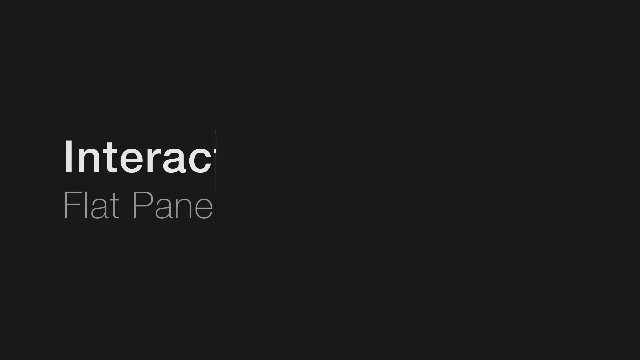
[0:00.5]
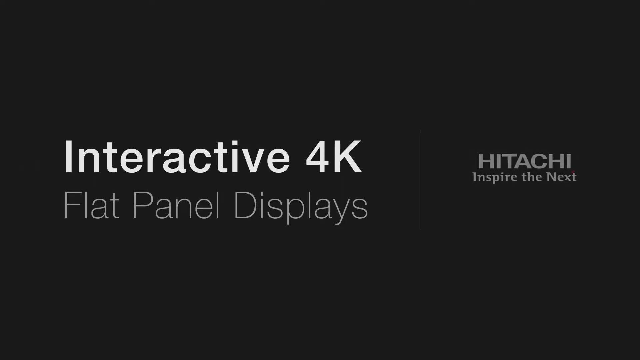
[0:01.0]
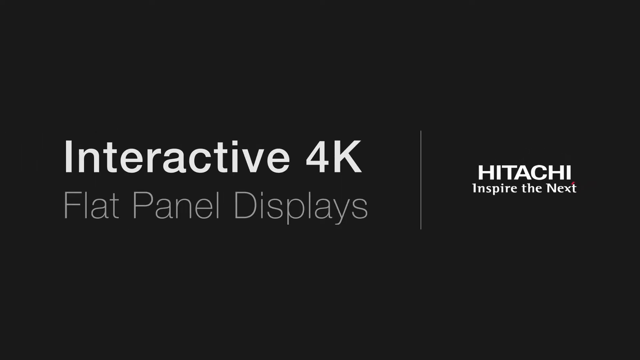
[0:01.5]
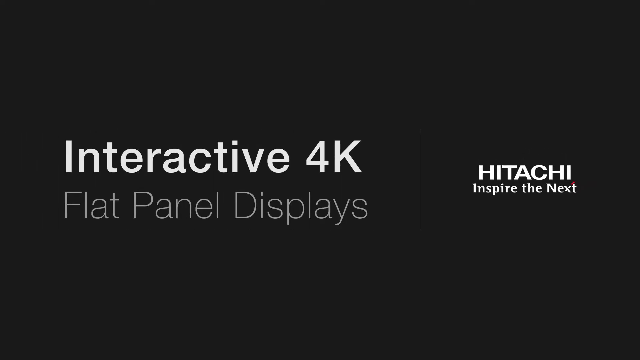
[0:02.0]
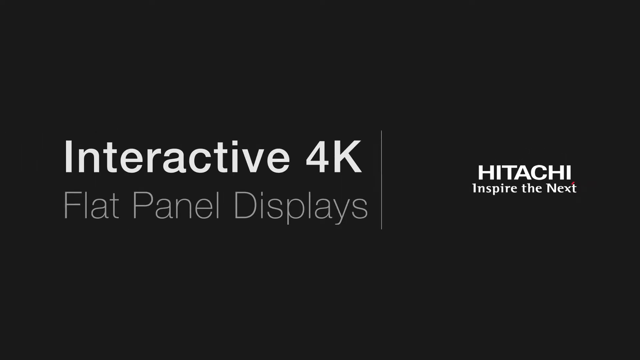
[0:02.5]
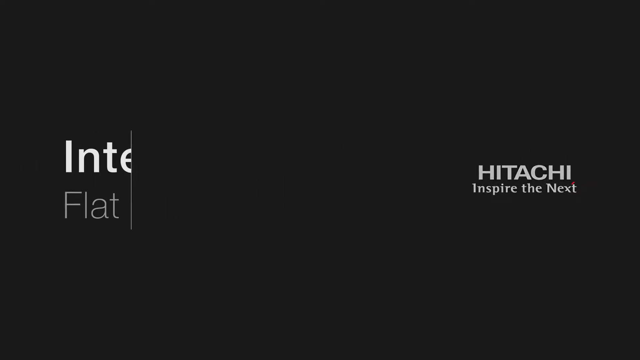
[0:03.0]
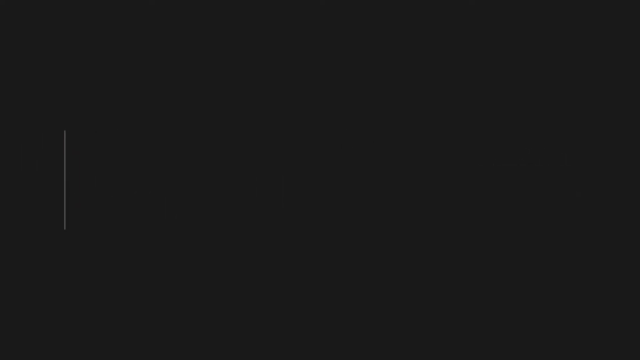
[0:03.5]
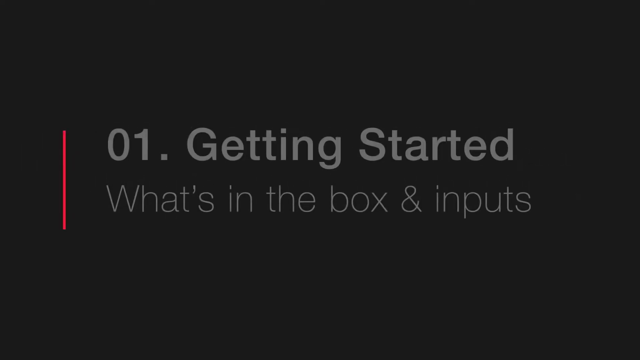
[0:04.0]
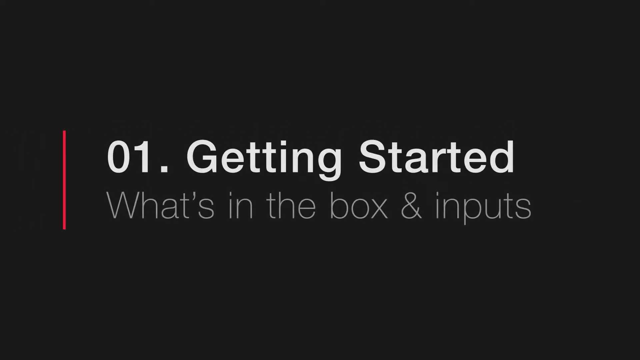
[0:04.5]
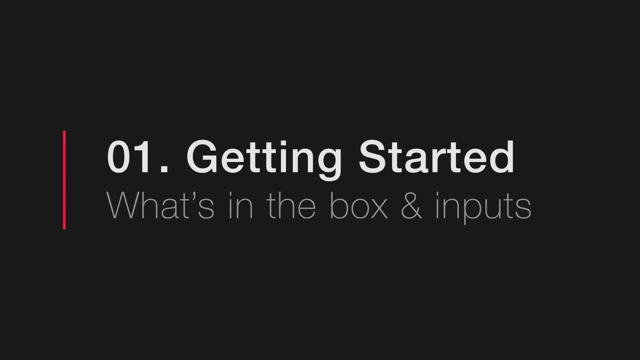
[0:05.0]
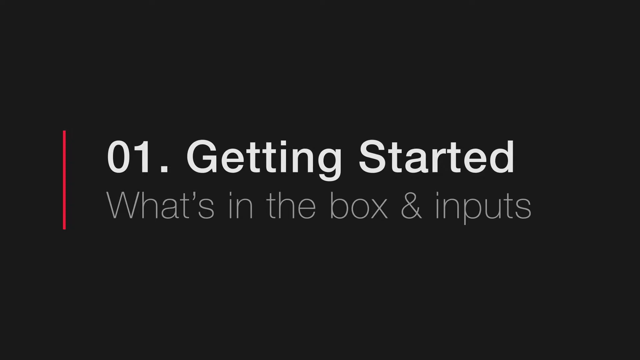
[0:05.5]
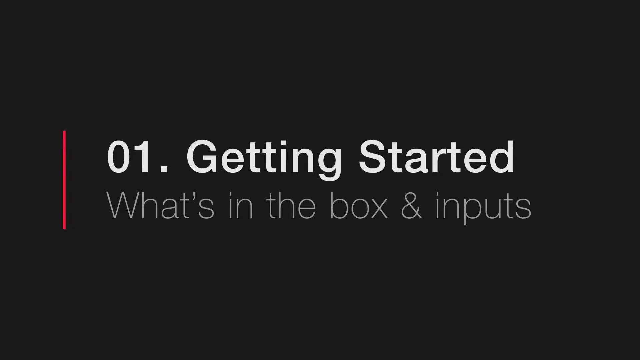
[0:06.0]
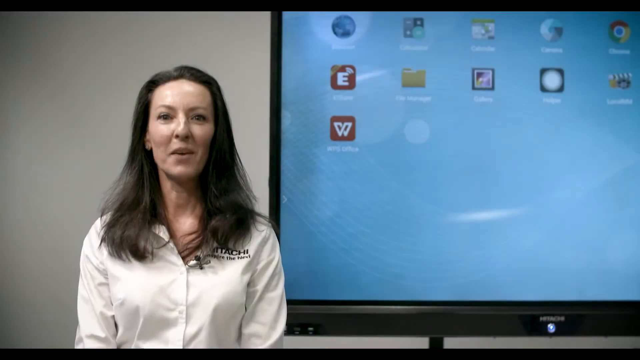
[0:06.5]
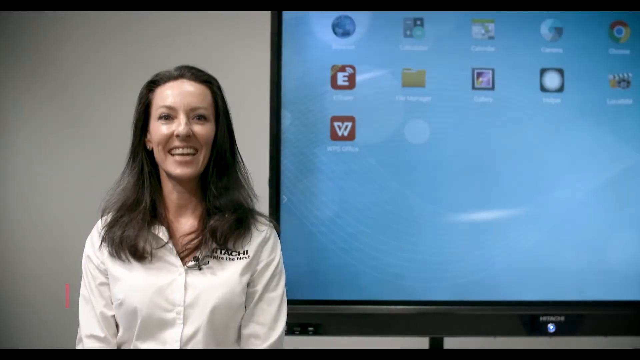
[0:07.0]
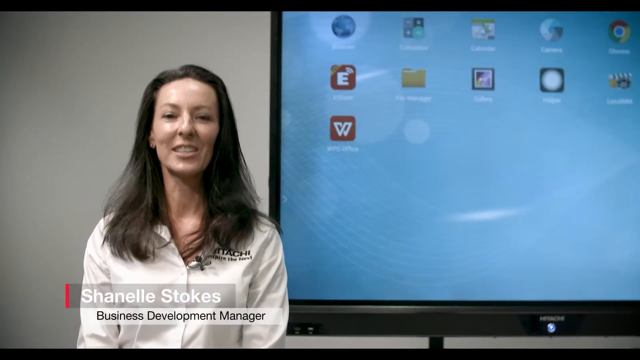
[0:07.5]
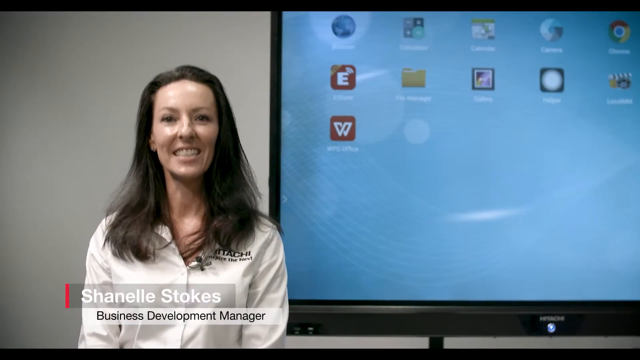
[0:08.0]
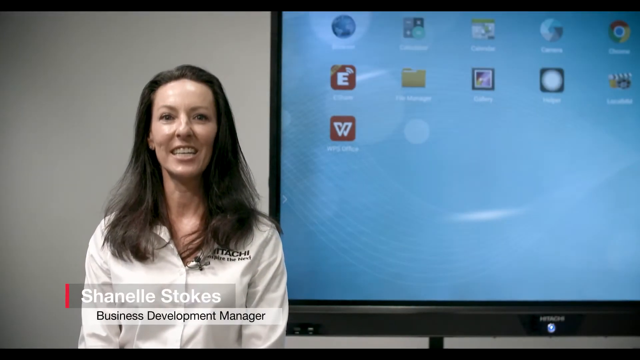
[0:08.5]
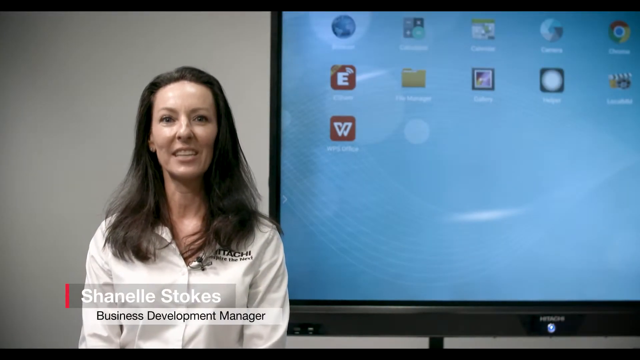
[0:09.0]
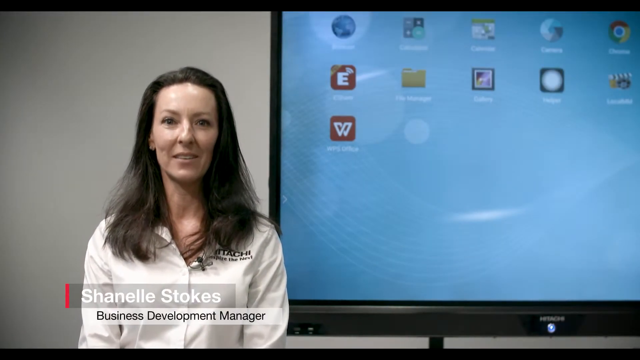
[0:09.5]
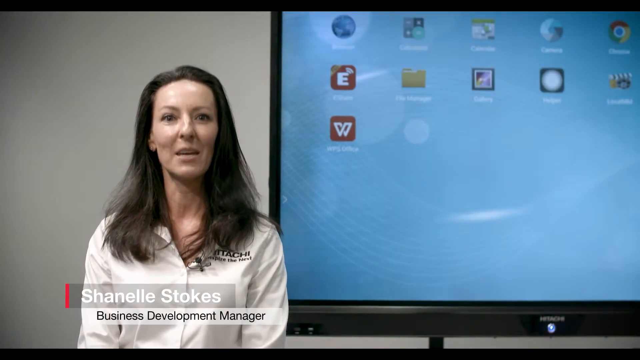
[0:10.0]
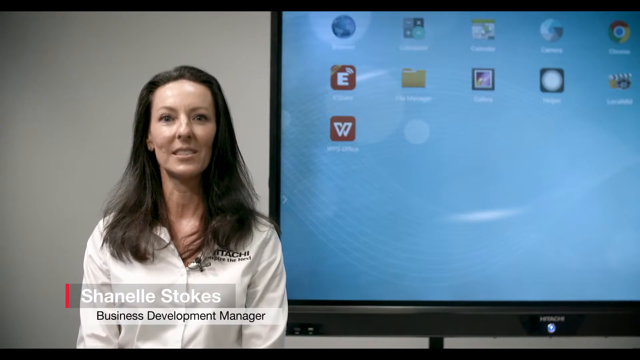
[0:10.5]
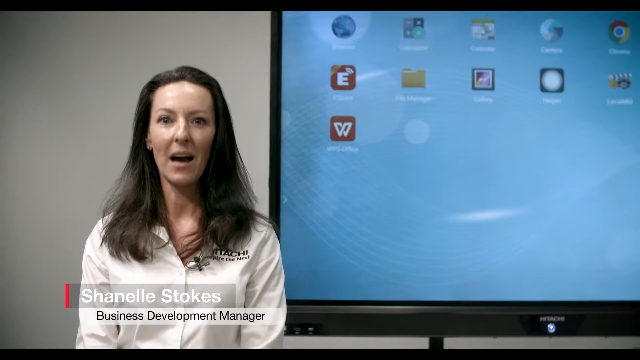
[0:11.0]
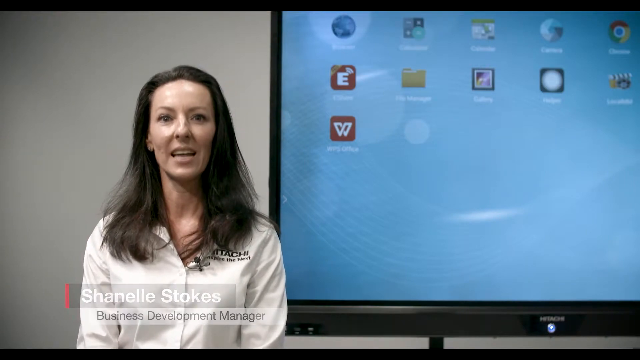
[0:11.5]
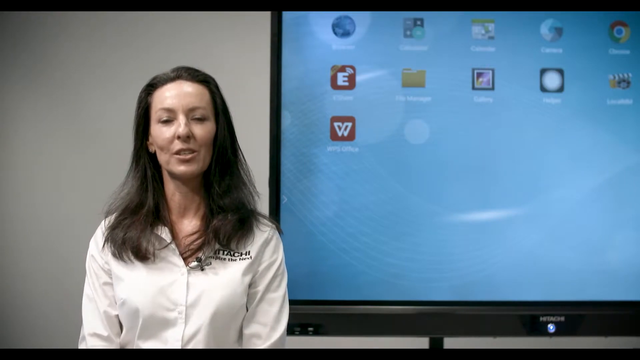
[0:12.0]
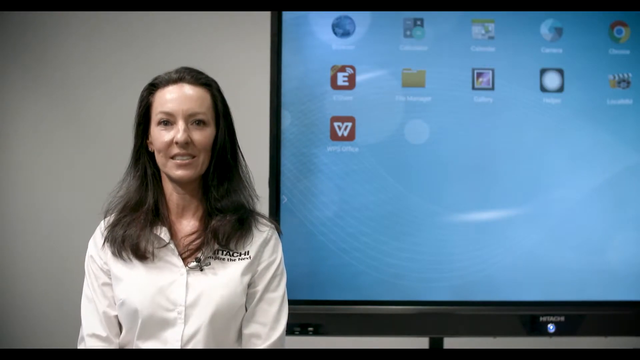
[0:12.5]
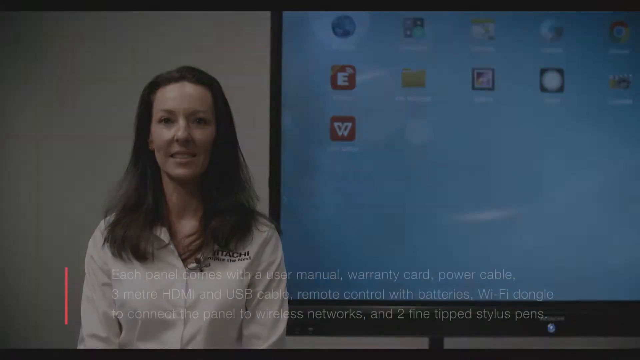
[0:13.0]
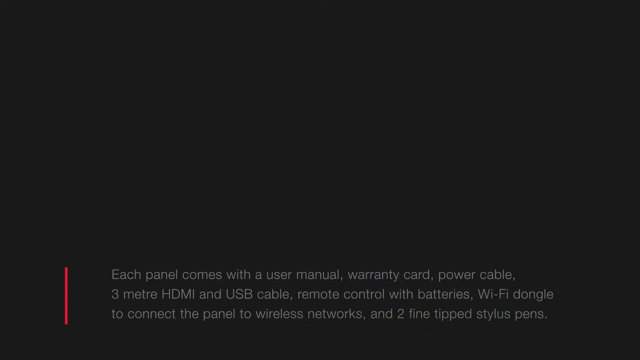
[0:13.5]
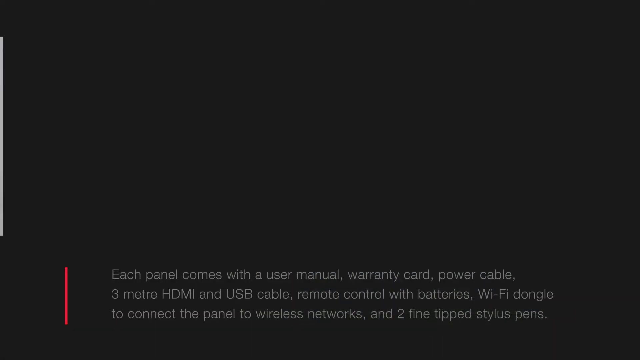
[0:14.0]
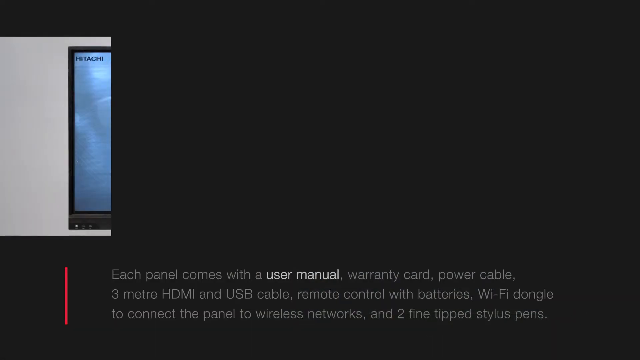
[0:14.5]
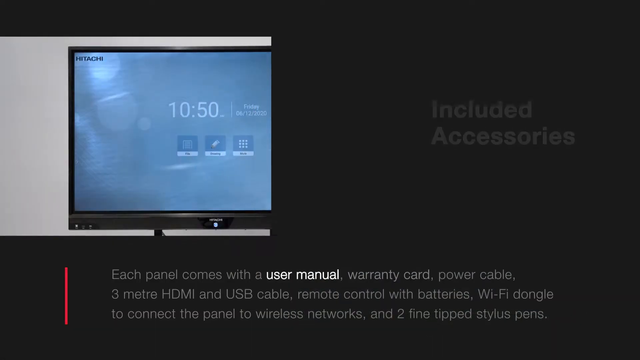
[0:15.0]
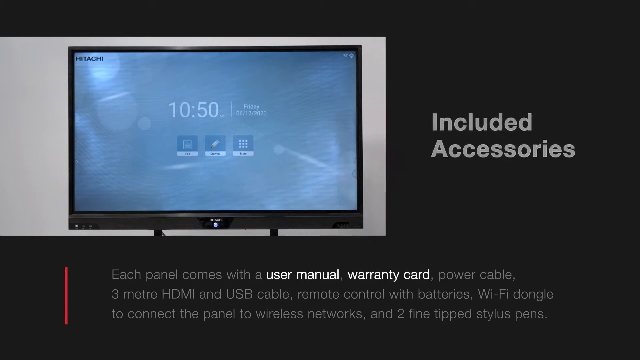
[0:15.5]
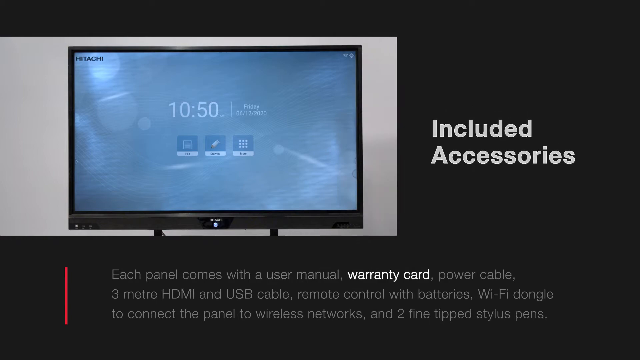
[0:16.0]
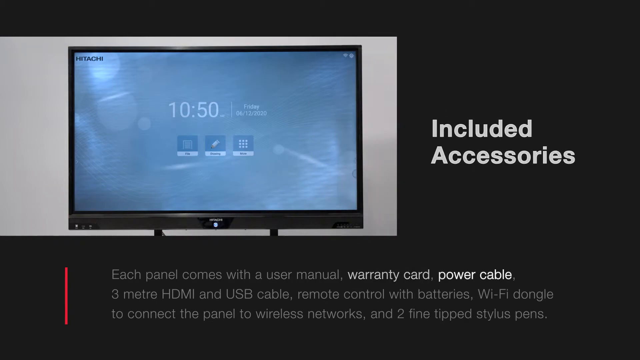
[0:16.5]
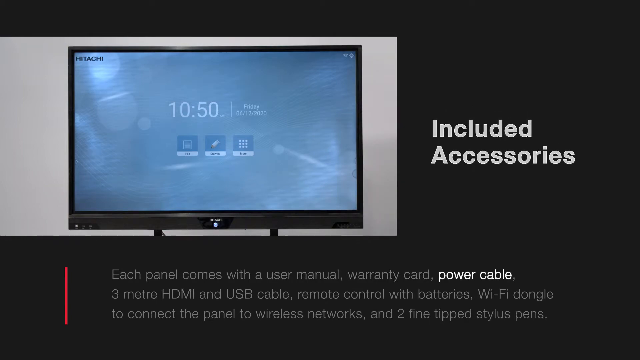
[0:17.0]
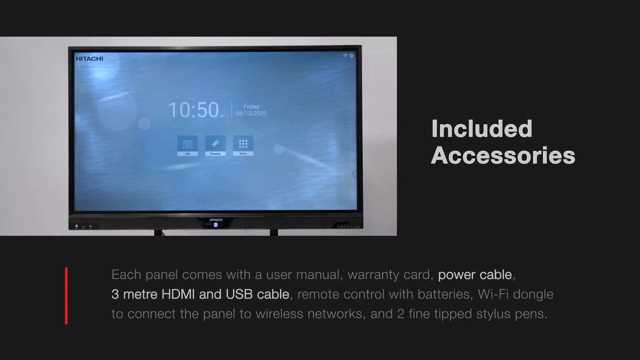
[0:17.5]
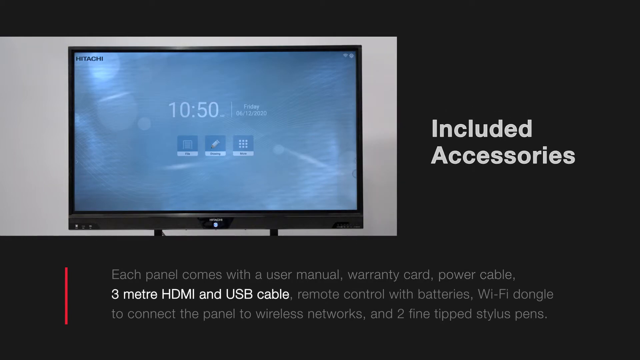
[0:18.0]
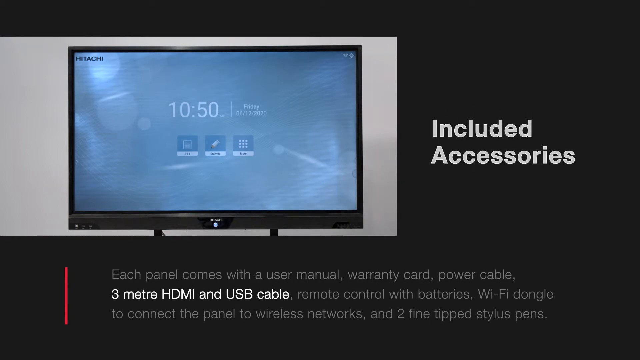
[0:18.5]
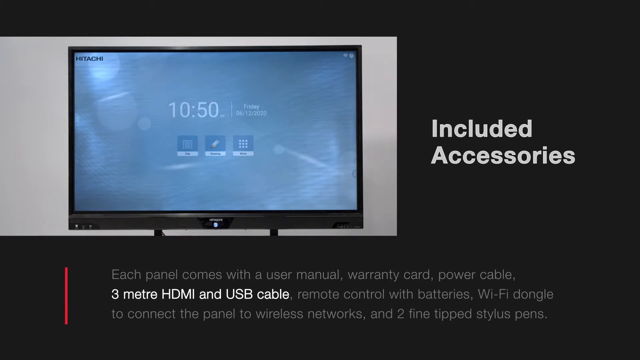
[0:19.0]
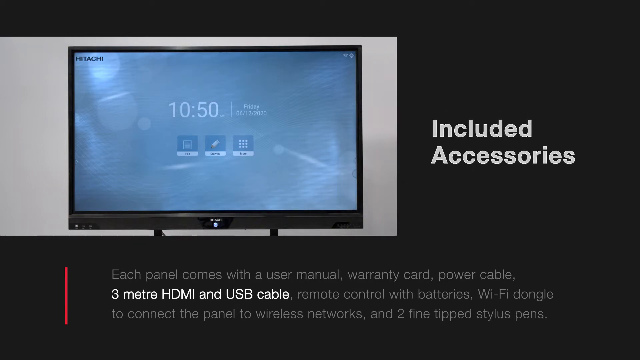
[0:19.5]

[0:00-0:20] An inscription reads "Interactive 4K flat panel displays," and the product is by Hitachi. A white woman in a white shirt has a microphone clipped to her shirt; she is Chanel Stokes, a business development manager for Hitachi. Behind her, a screen displays multiple apps, including WPS File Manager, Gallery, Room, Camera, Calculator and others. Moving on to what is in the box, the woman says each panel comes with a user manual, a warranty card, a power cable, a three-meter HDMI and USB cable, a remote control with batteries, a Wi-Fi dongle to connect the panel to wireless networks, and two fine-shaped stylus pens.